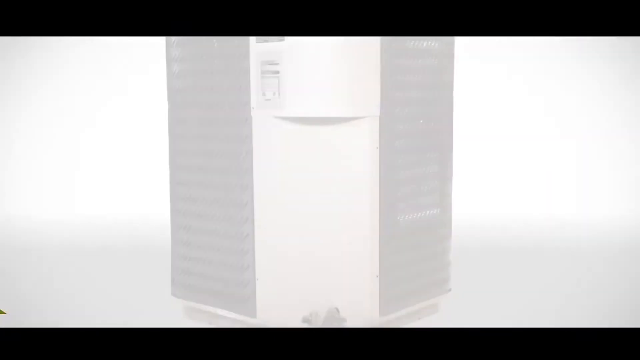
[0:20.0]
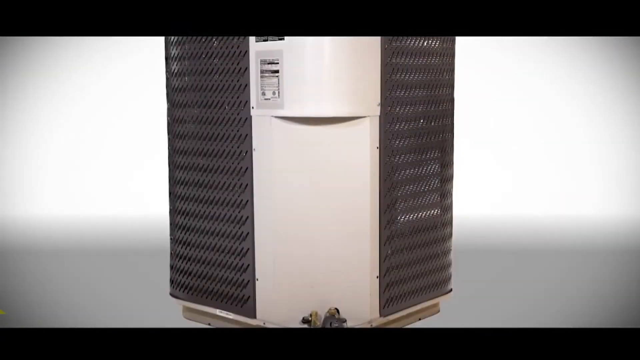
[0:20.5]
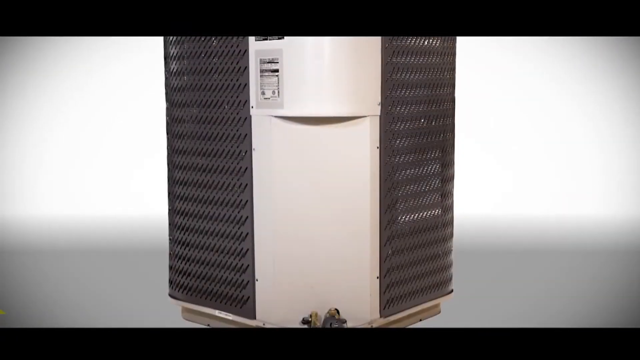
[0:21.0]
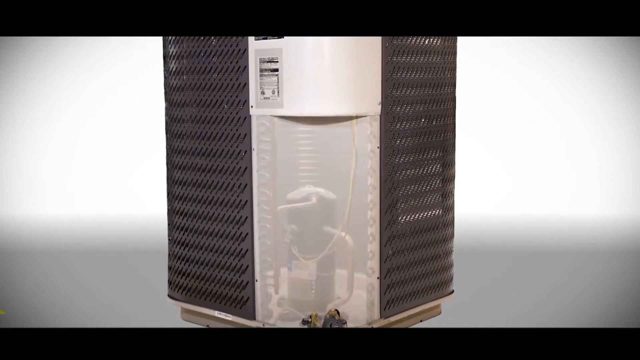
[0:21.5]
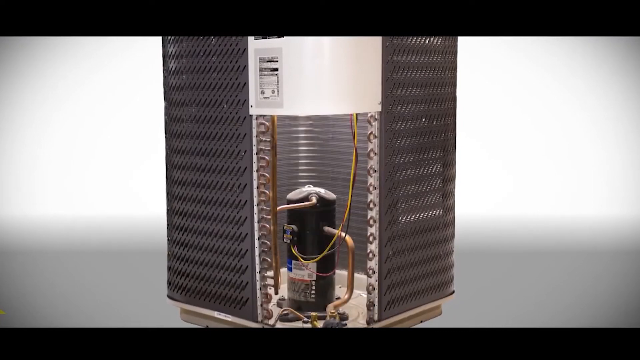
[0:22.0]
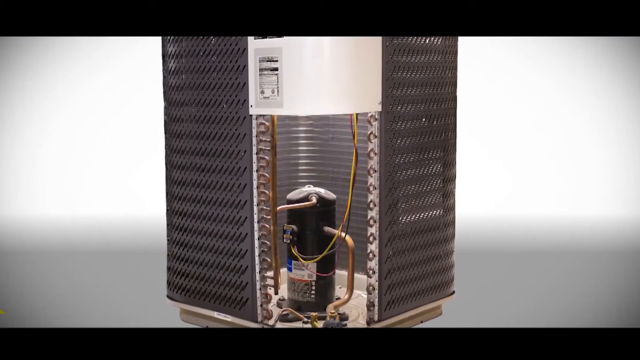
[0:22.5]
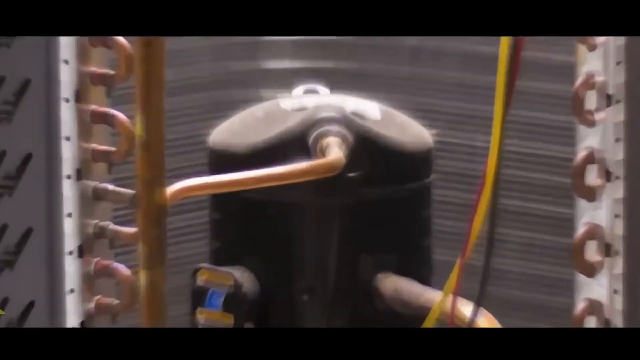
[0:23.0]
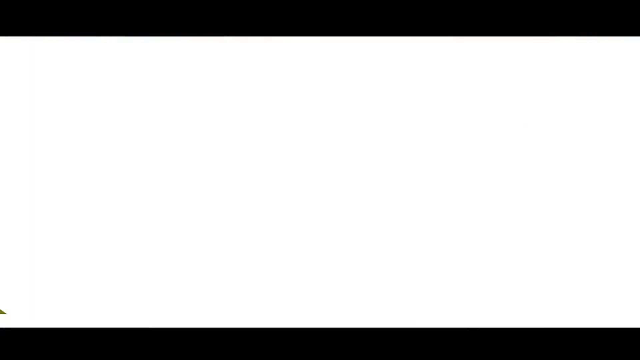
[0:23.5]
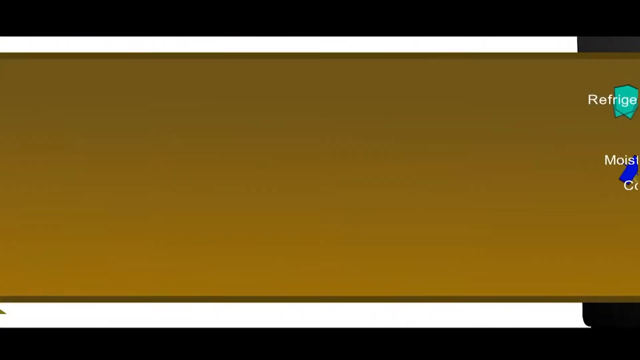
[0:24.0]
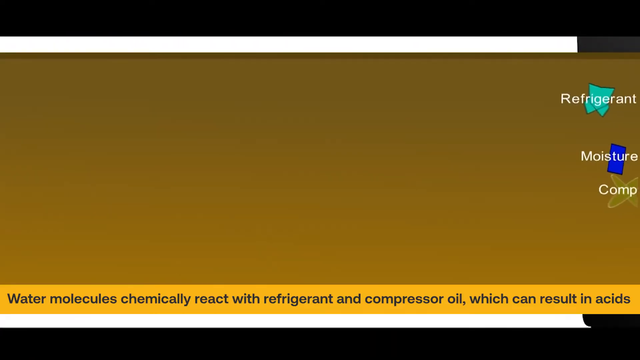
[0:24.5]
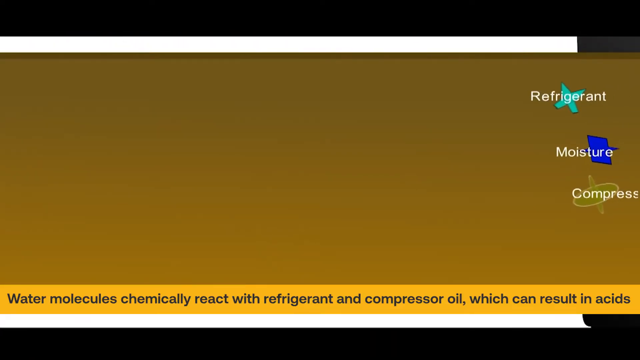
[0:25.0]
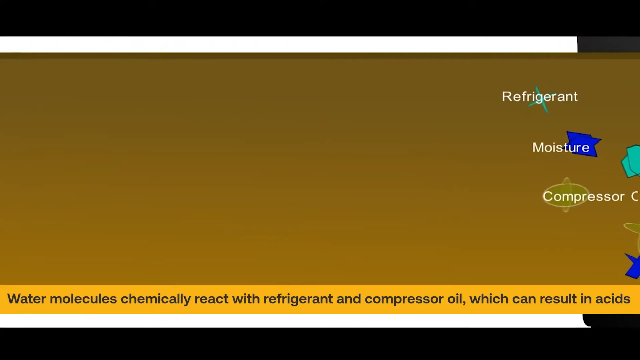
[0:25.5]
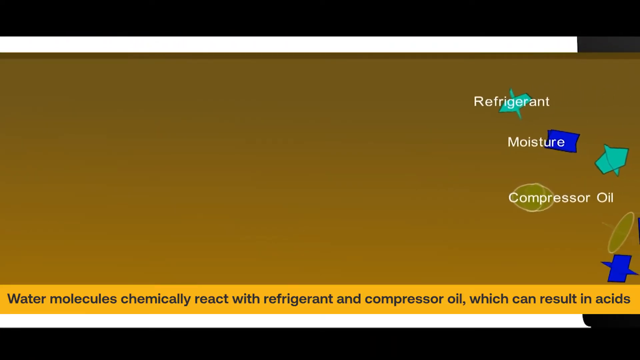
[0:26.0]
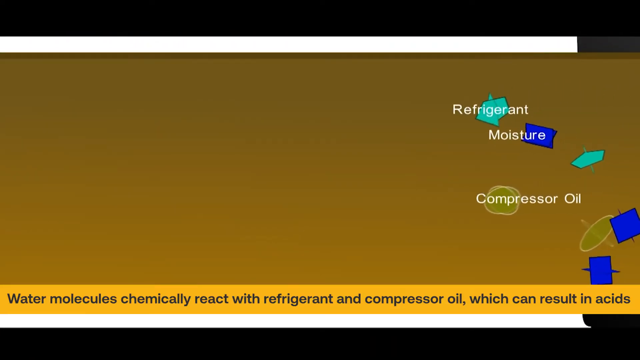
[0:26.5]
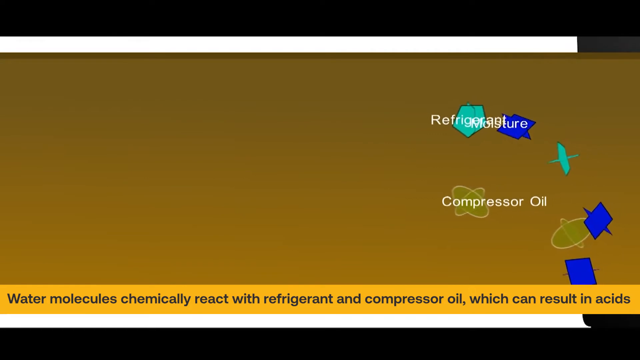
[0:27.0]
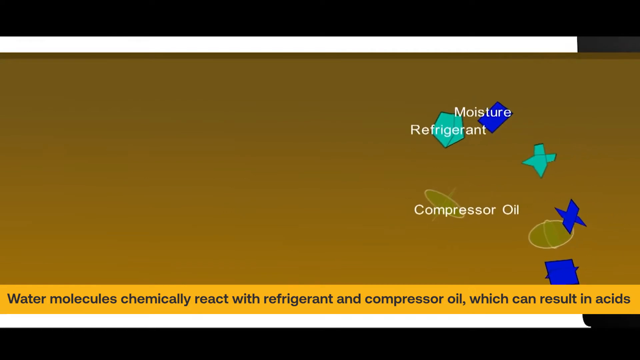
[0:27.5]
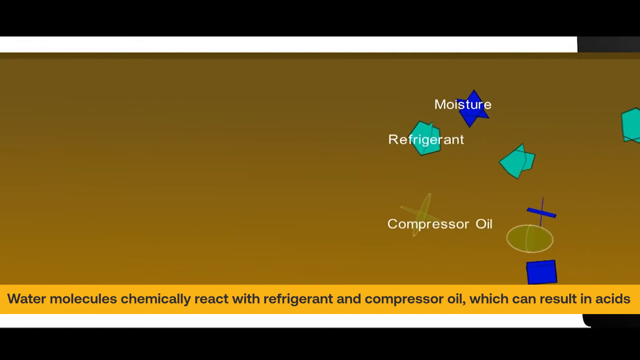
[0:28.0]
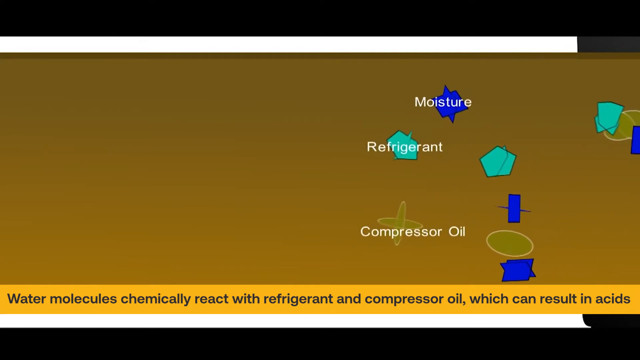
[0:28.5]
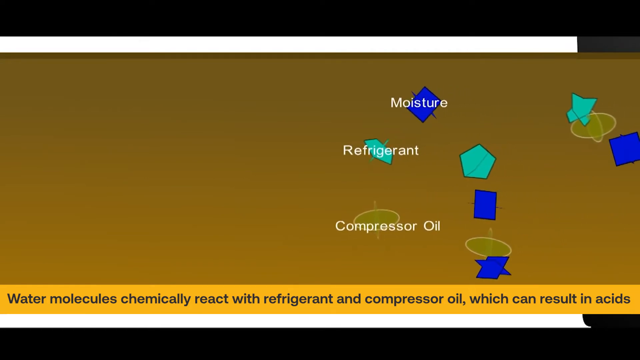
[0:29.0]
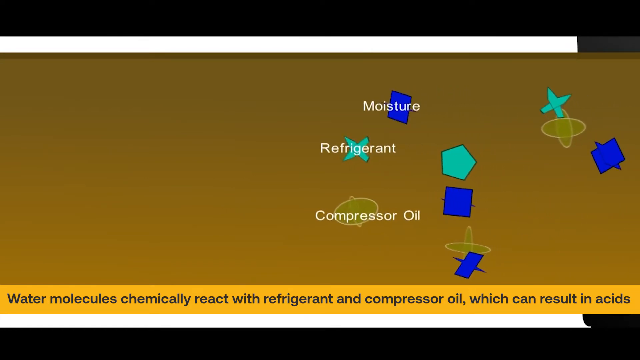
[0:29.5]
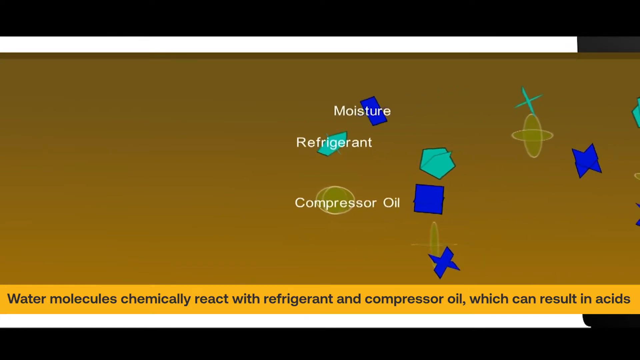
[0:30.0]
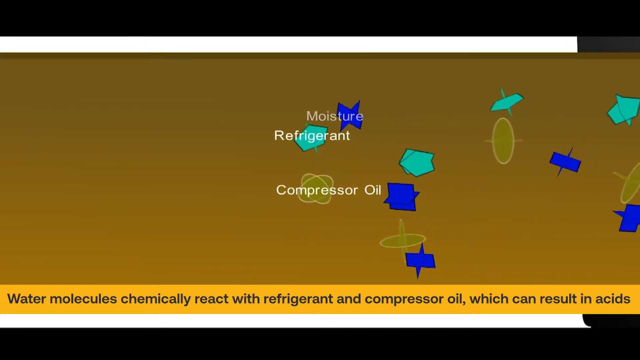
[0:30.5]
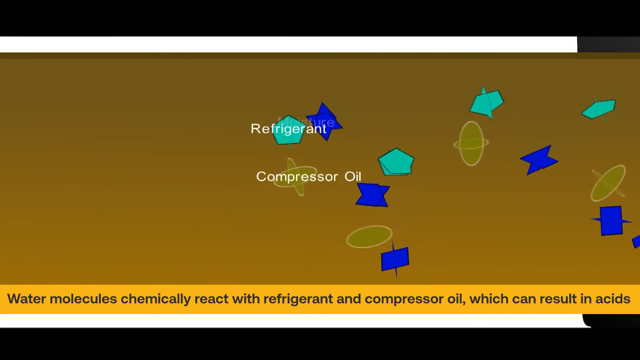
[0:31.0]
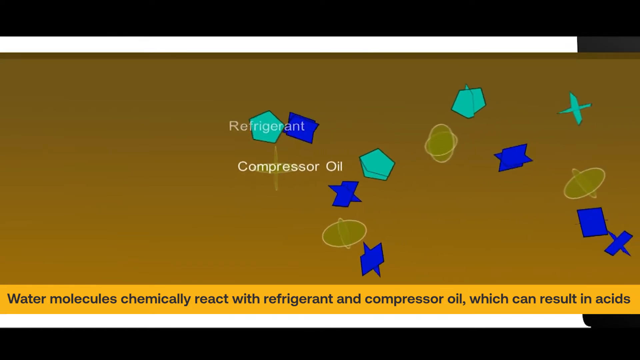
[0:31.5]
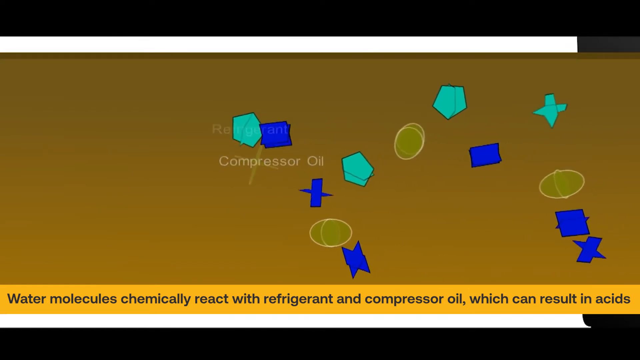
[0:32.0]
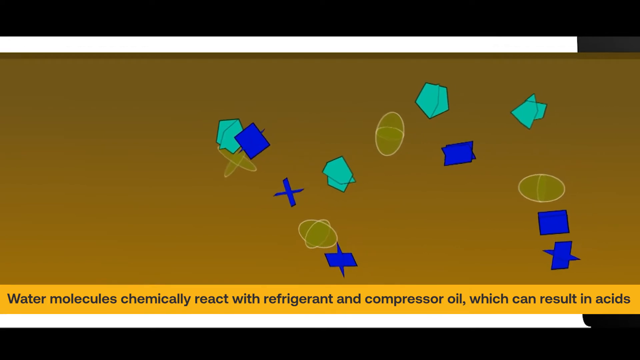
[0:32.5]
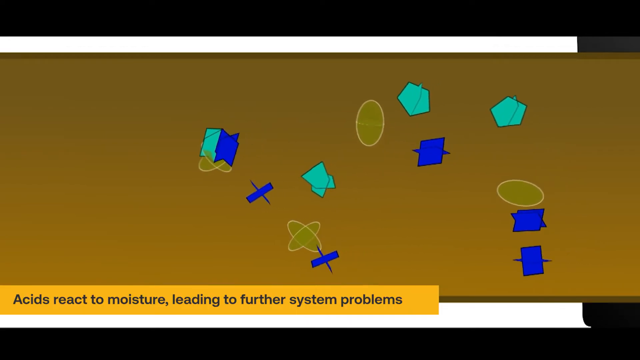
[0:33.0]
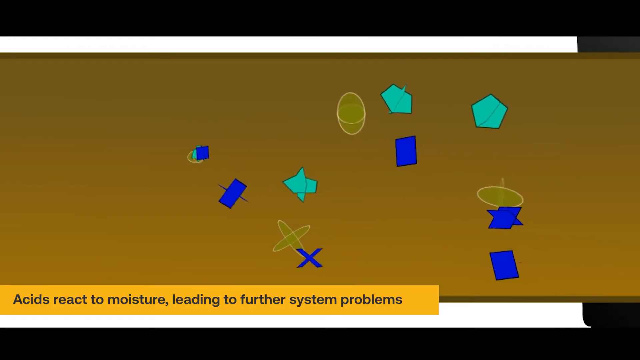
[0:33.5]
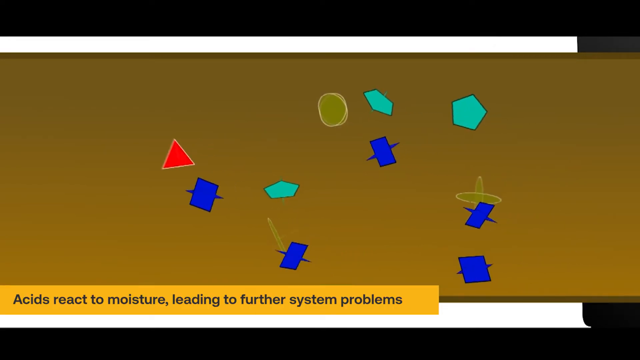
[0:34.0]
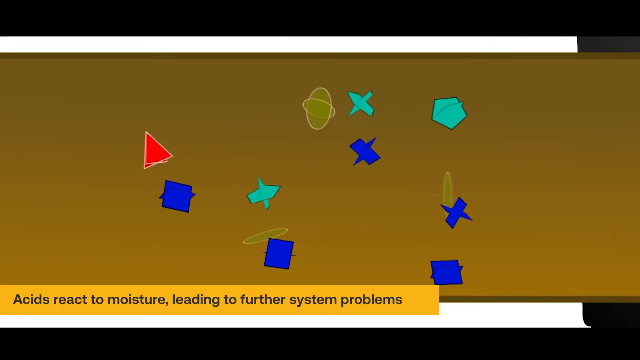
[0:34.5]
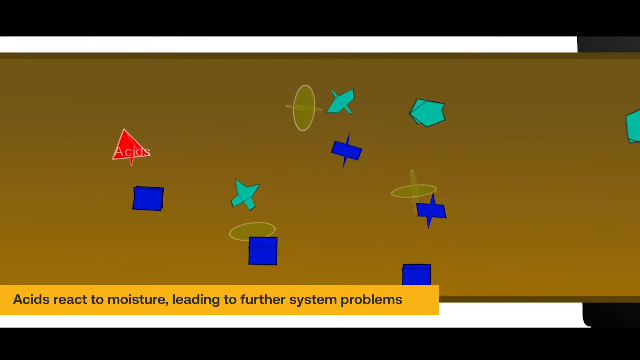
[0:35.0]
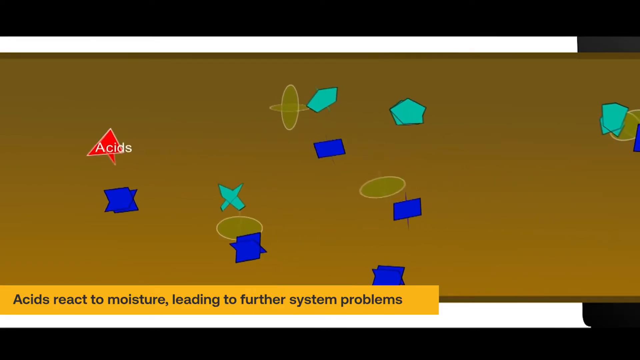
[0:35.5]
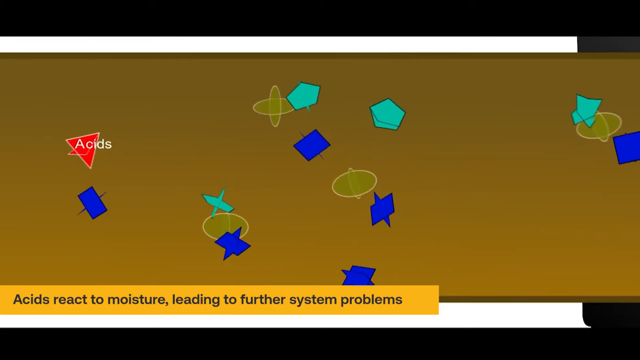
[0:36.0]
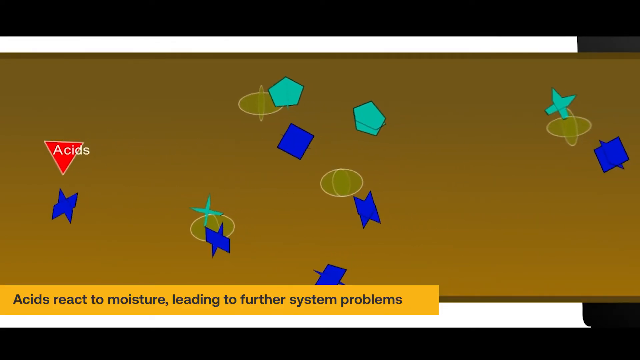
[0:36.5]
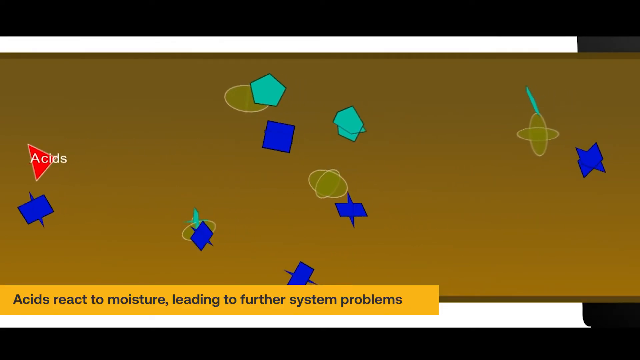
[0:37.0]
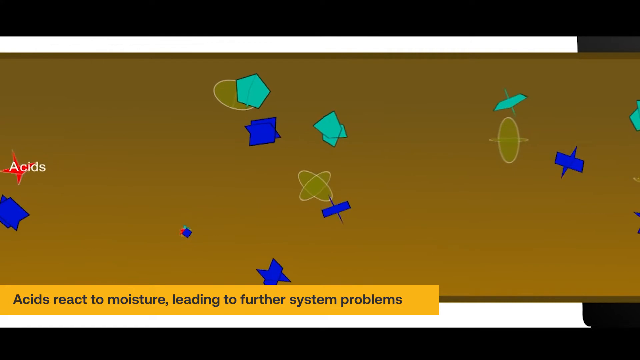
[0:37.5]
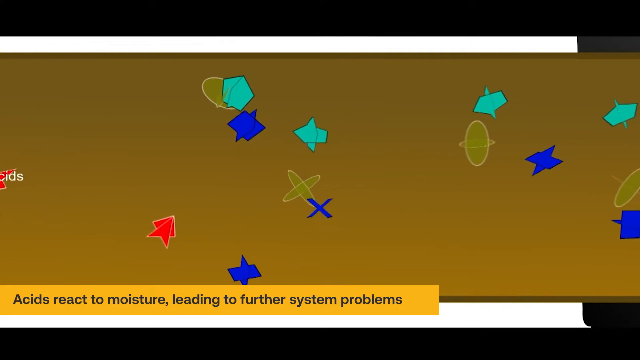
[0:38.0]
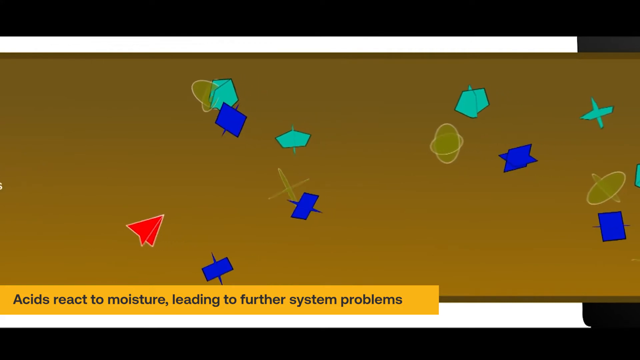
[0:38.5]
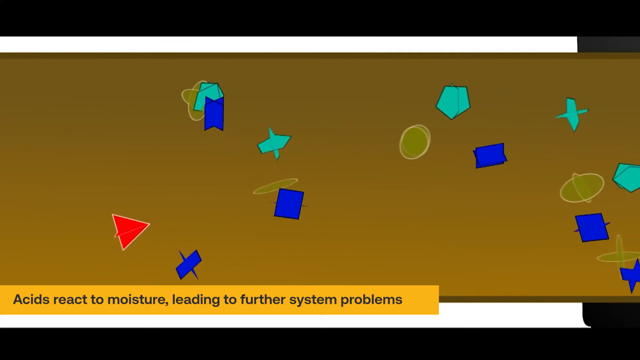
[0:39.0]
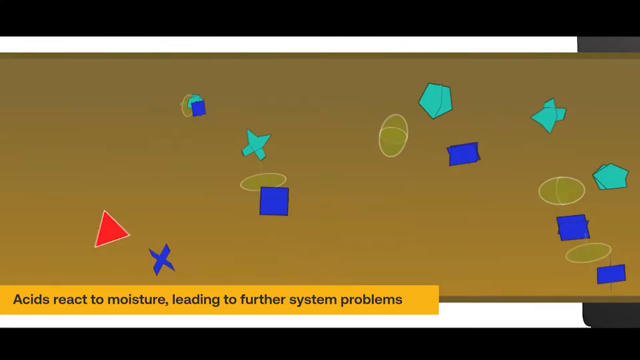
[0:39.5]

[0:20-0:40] What appears to be a picture or screenshot of a ventilation or HVAC system is shown. The view zooms in from the outside to show the internal parts. It then cuts to an animated infographic about water molecules chemically reacting with refrigerant and compressor oil, resulting in acids. The reaction is shown with various shapes and colors: a red arrow, dark navy blue particles representing moisture, light blue representing refrigerant, and yellow representing compressor oil. Text accompanies this at the beginning, and a written explanation in the bottom left describes how issues arise in the coolant.